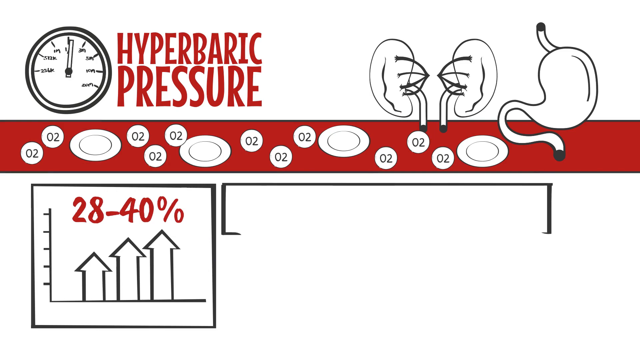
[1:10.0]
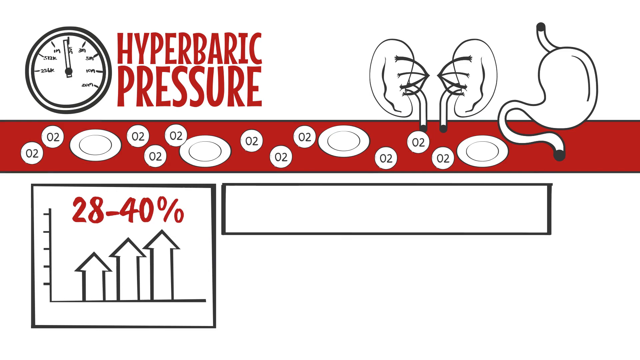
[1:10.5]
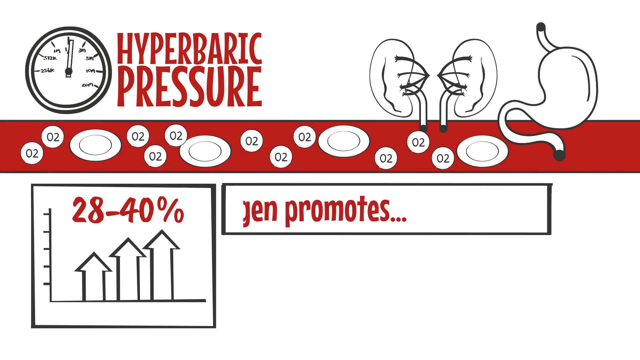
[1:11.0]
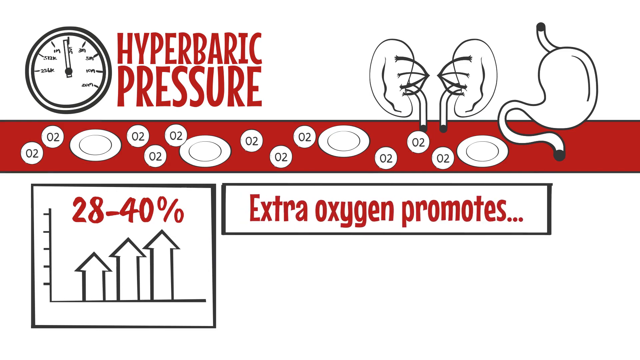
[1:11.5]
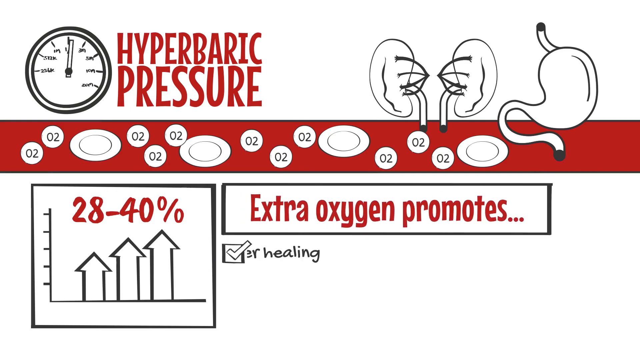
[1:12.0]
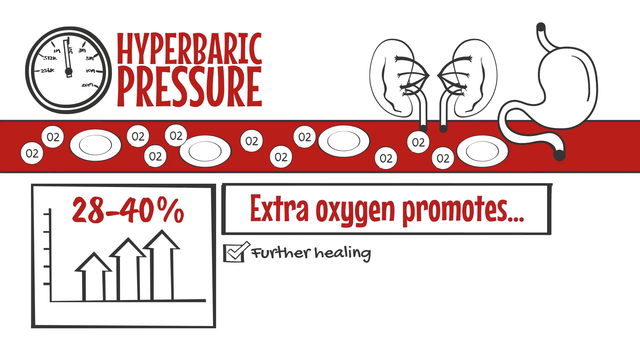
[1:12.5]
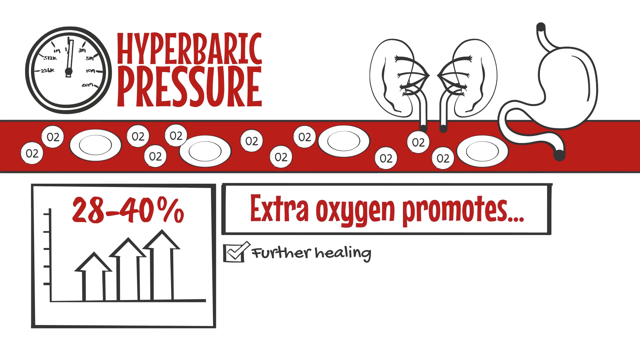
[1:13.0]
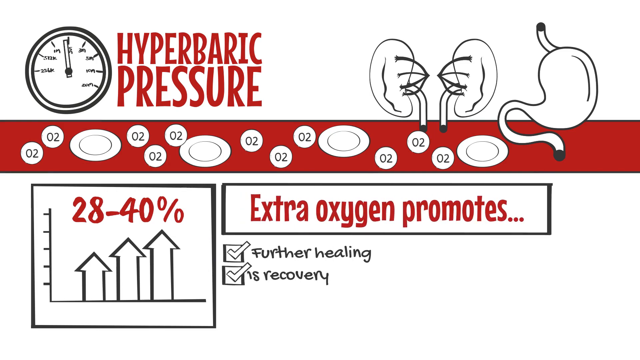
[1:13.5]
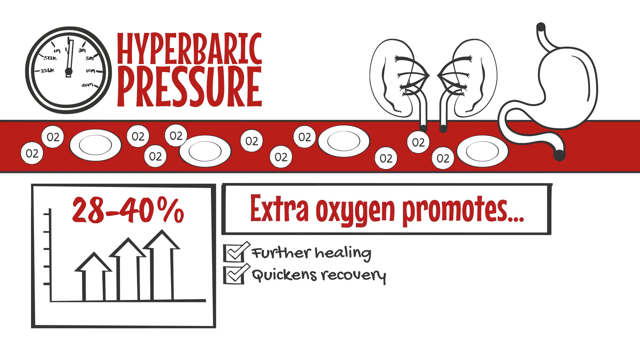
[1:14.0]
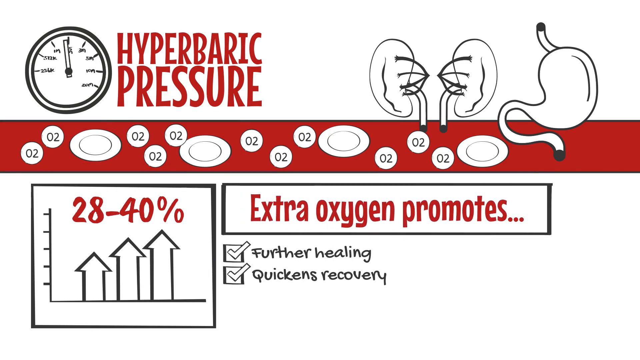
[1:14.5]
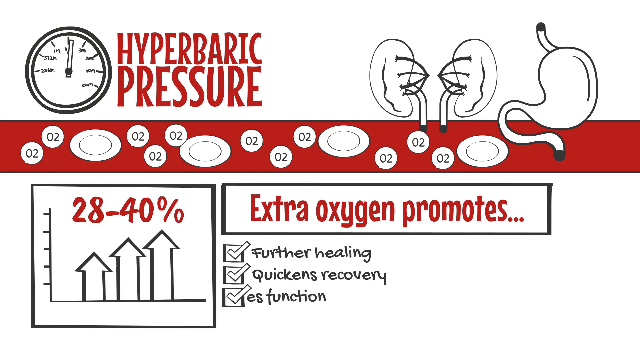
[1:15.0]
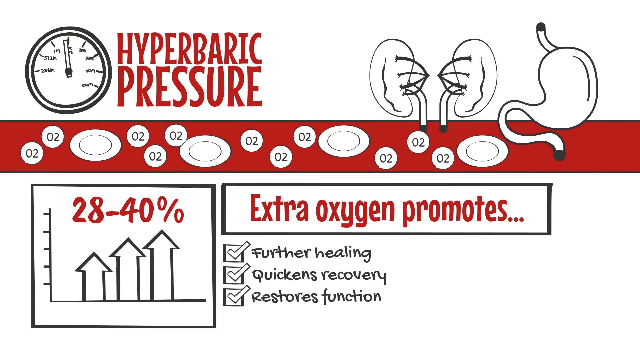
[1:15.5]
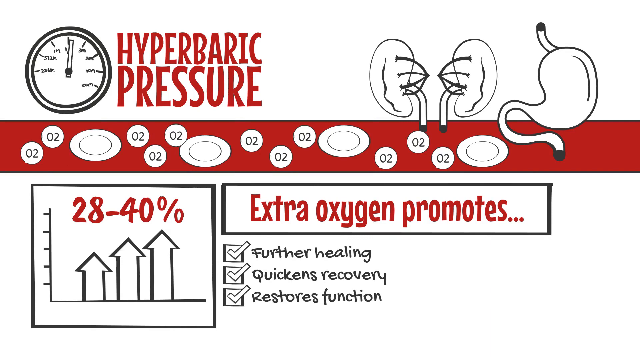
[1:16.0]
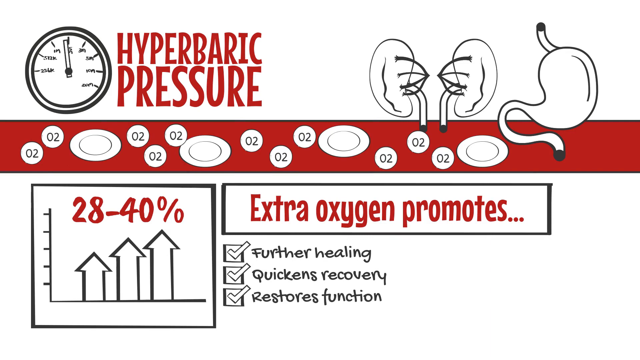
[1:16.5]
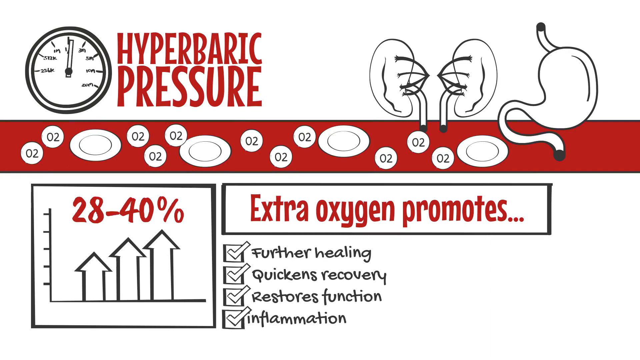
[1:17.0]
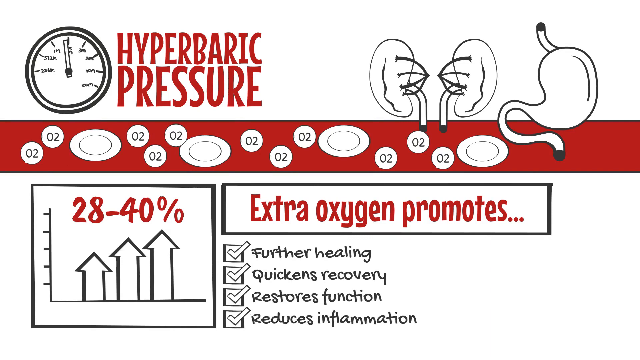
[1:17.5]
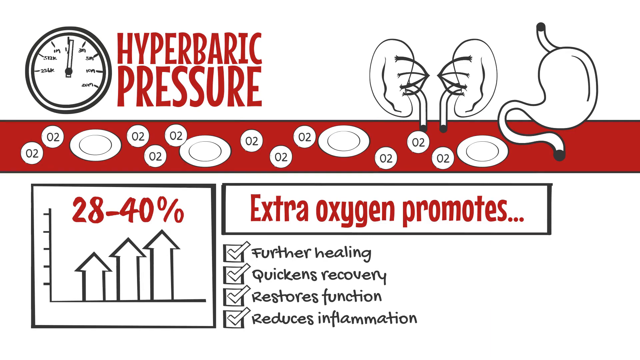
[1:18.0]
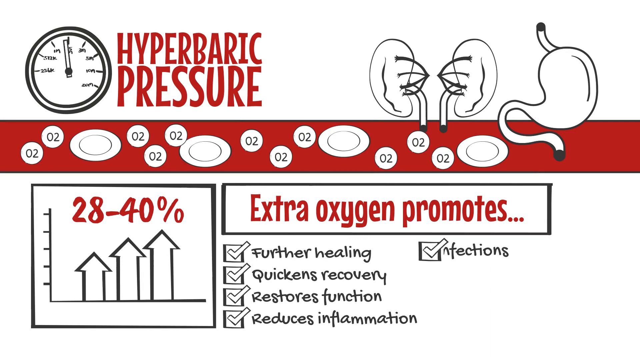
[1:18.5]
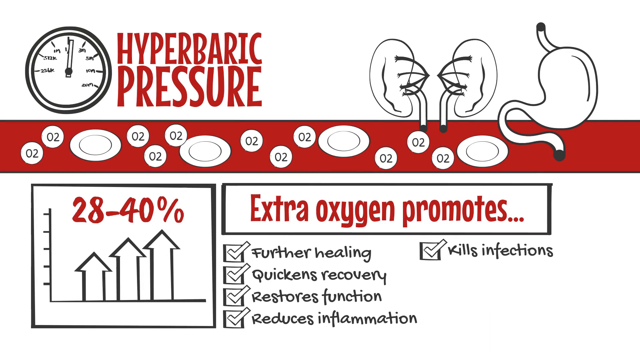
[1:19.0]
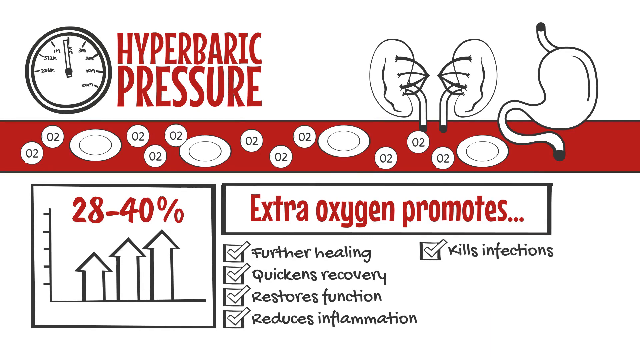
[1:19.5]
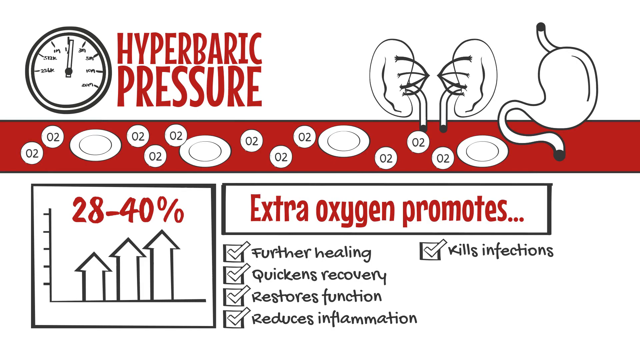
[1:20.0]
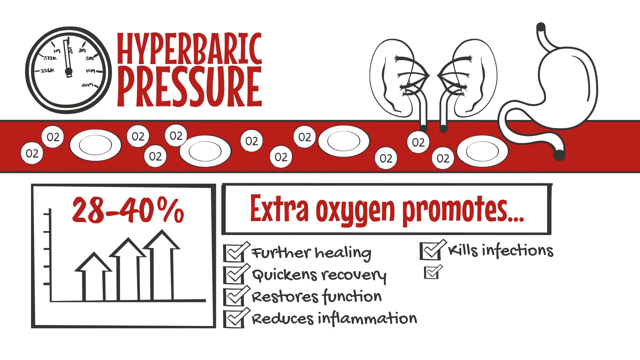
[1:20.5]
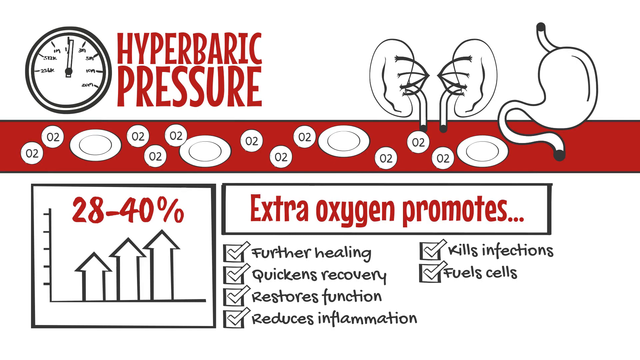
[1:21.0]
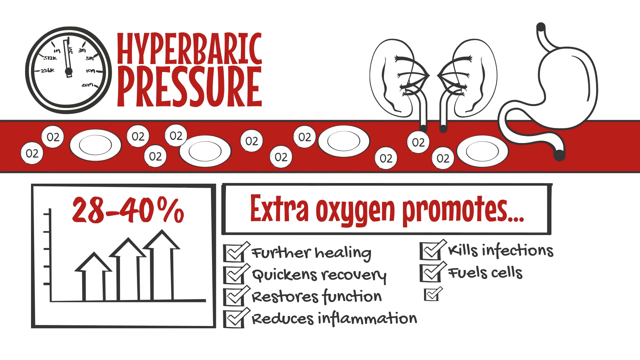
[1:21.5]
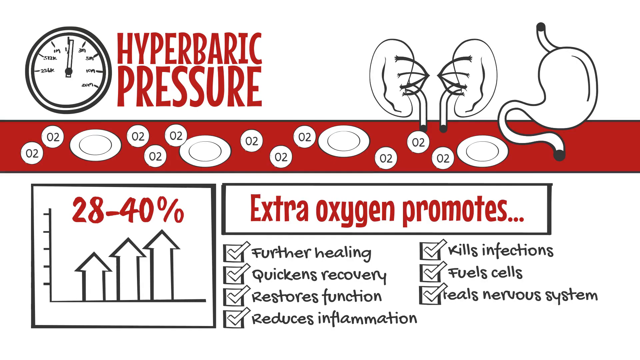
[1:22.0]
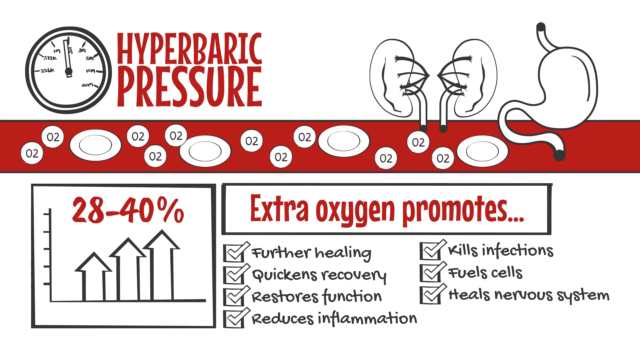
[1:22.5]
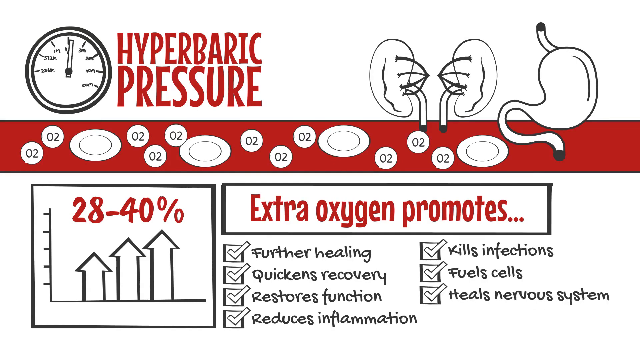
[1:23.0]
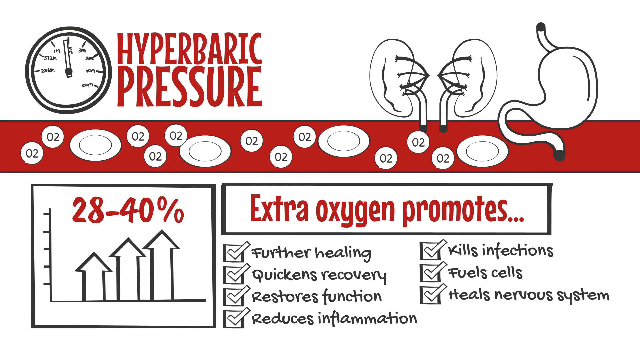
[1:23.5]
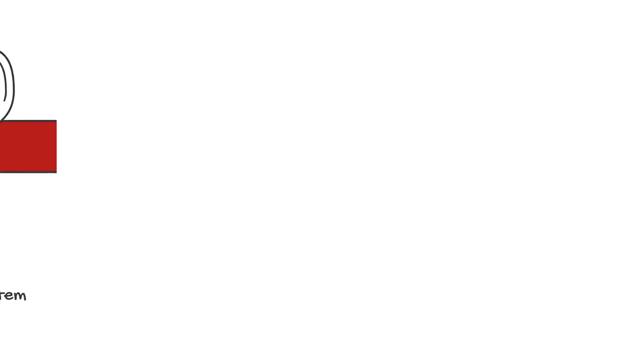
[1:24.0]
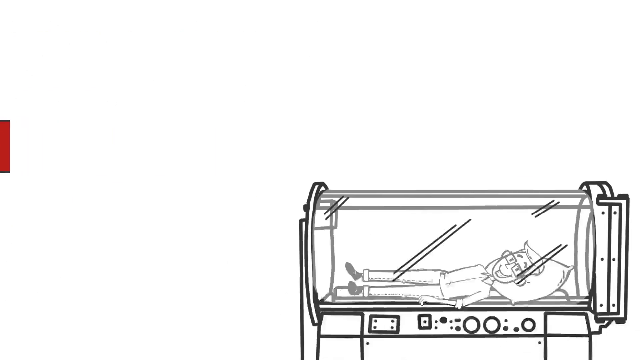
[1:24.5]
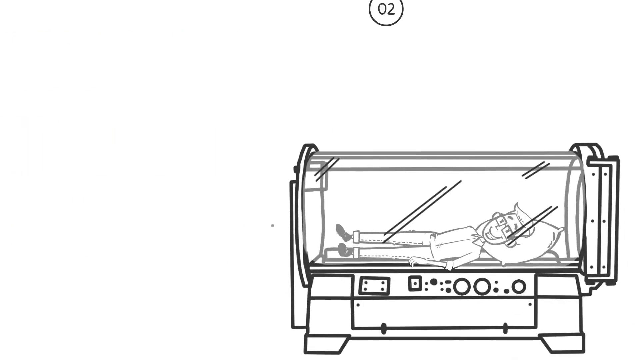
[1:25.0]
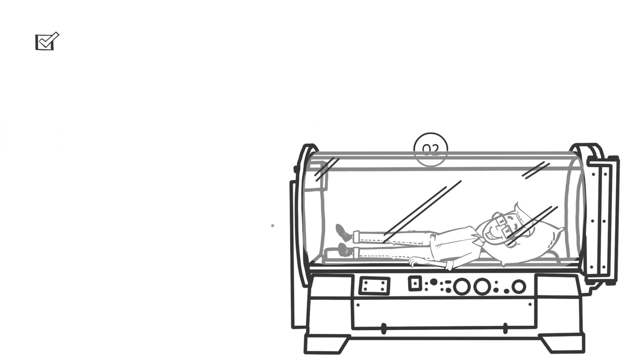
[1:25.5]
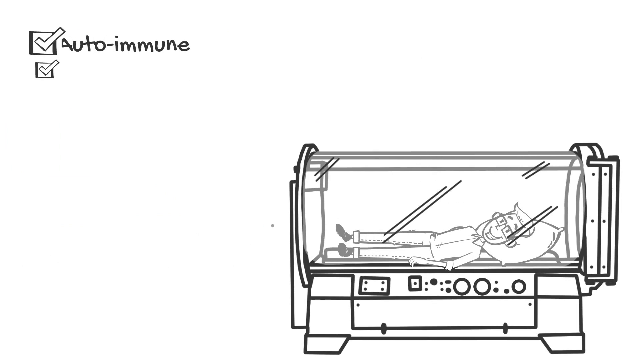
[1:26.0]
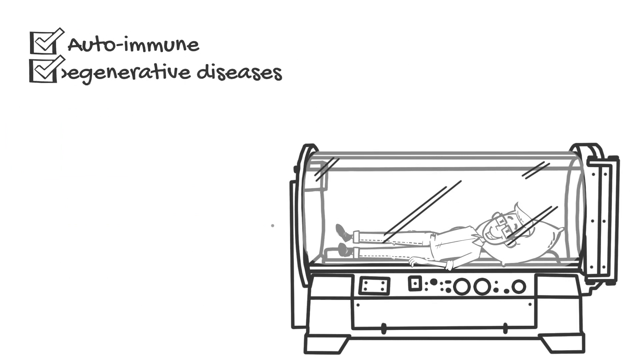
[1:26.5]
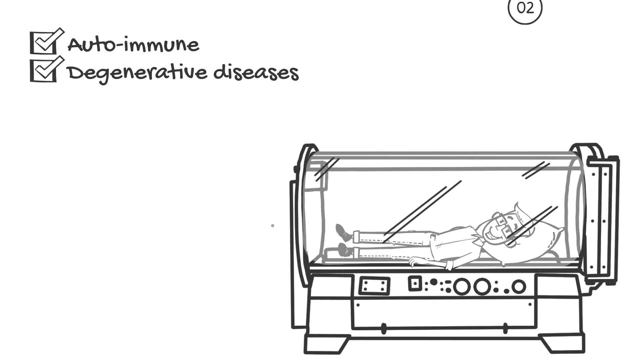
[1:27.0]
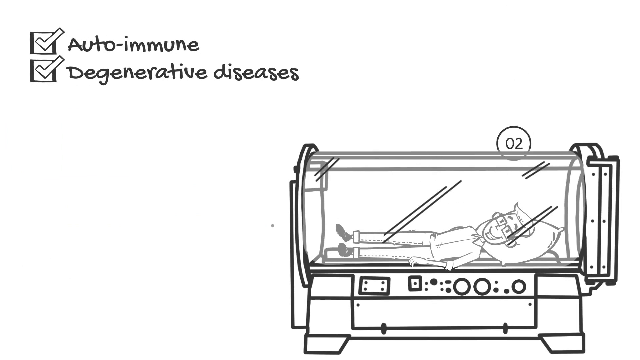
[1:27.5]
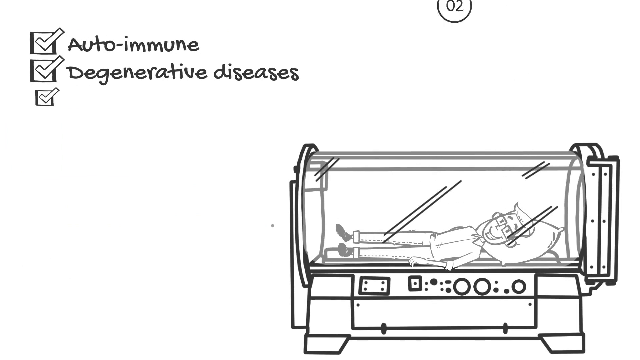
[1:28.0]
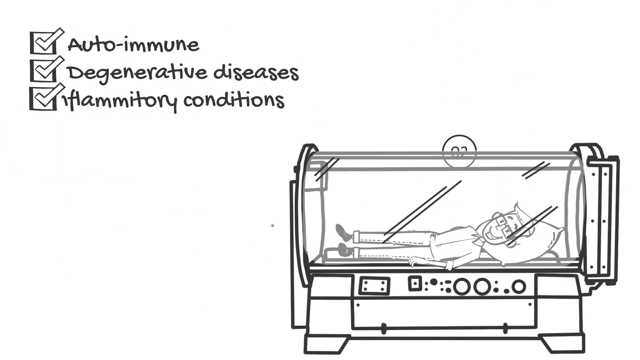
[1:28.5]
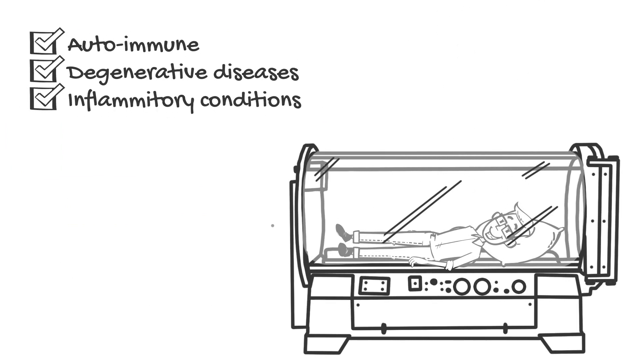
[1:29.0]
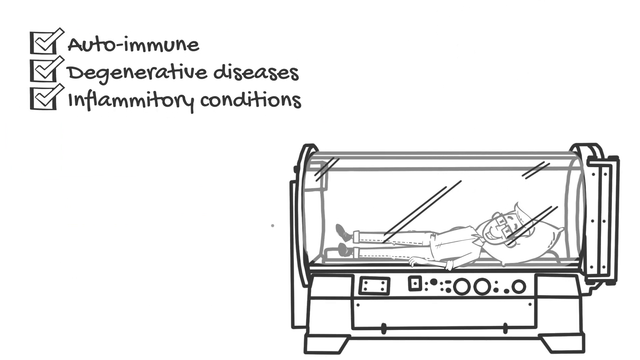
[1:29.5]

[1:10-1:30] The chart at the bottom is a square that looks like a graph showing 28% to 40%. Next to the graph, the hand writes "extra oxygen promotes further healing," followed by a list: quickens recovery, restores function, reduces inflammation, kills infections, fuels cells, heals nervous system, each with a check mark. The next screen shows the patient in some kind of incubator with O2 falling down onto him. On the left, items come in and are checked: autoimmune, degenerative diseases, inflammatory conditions.